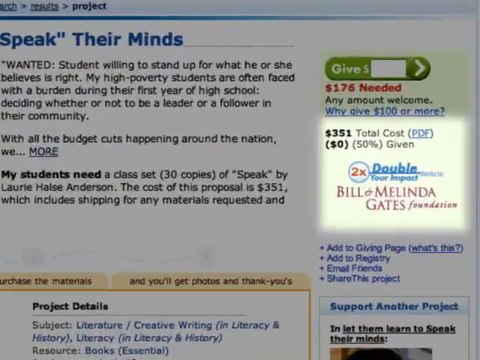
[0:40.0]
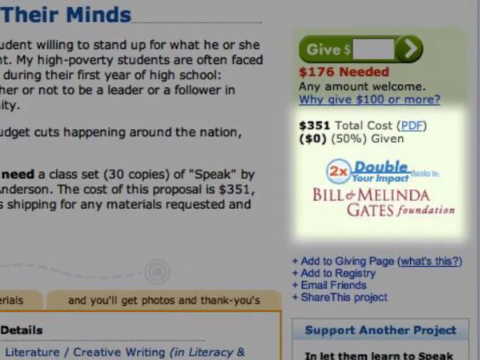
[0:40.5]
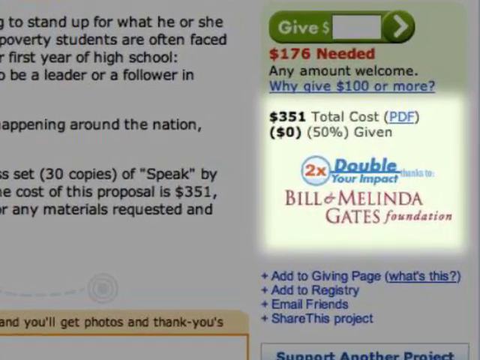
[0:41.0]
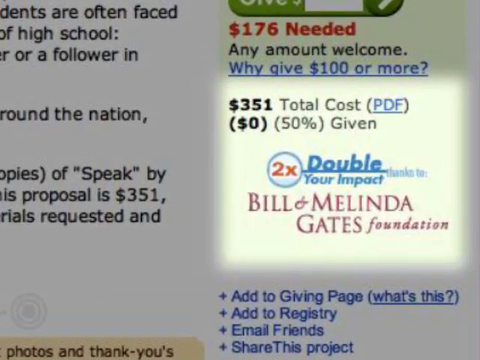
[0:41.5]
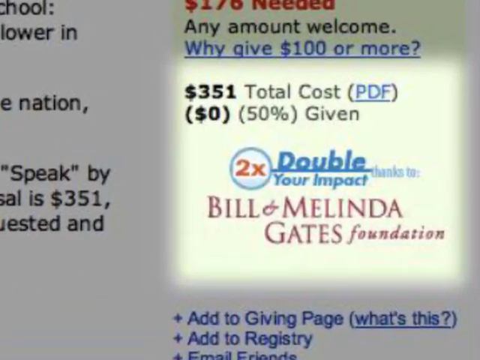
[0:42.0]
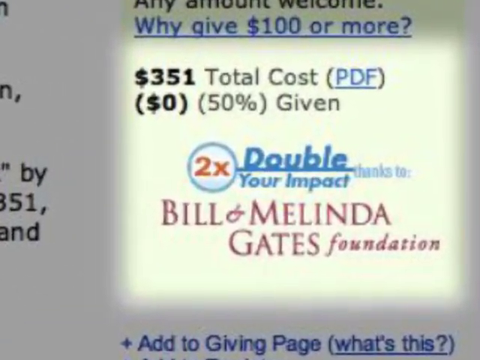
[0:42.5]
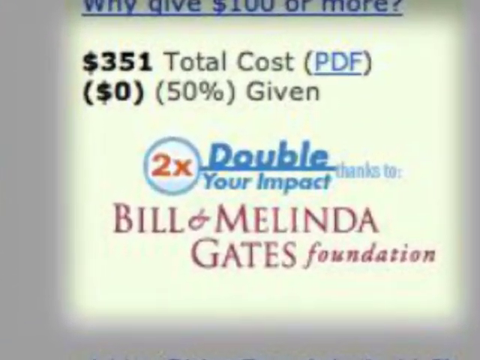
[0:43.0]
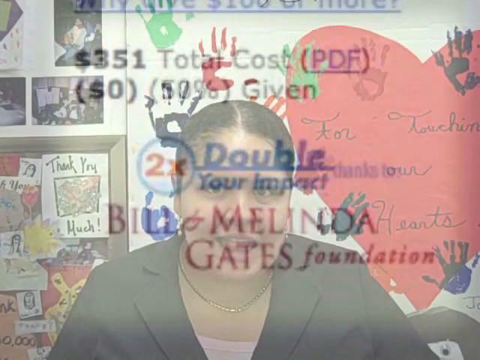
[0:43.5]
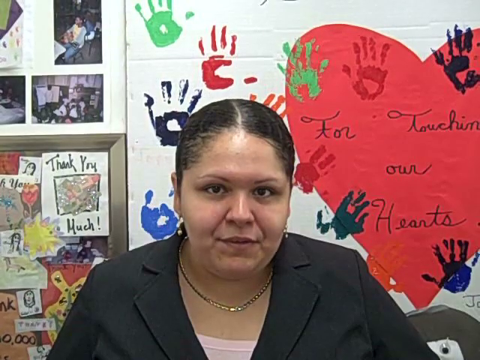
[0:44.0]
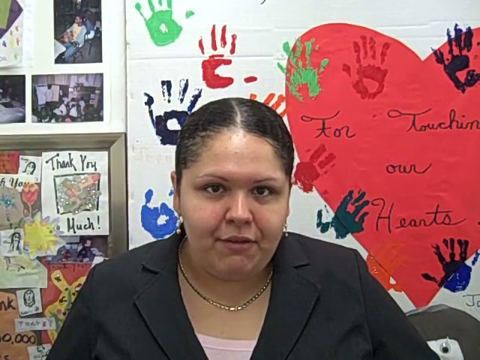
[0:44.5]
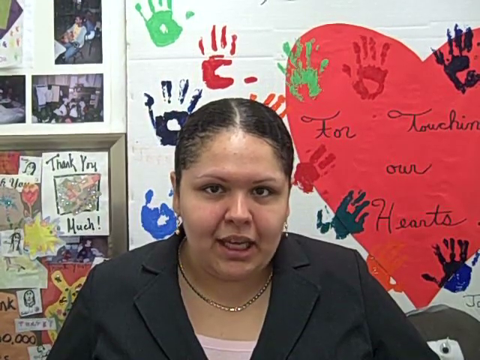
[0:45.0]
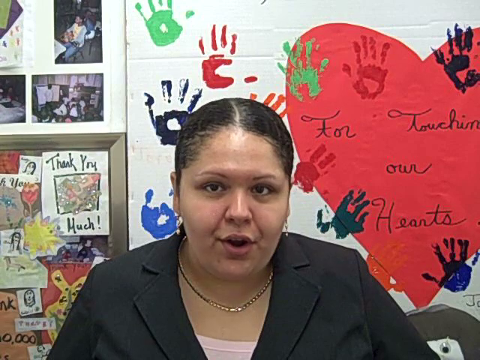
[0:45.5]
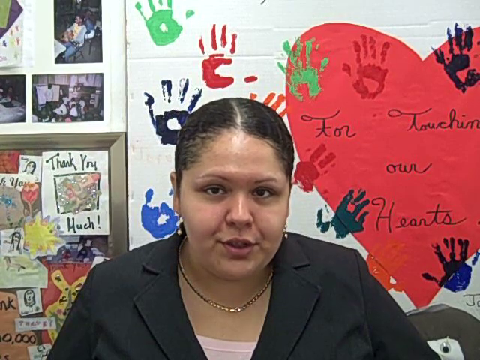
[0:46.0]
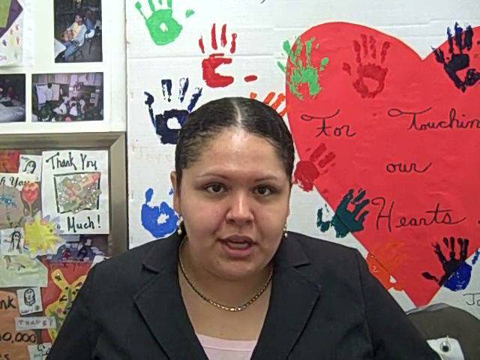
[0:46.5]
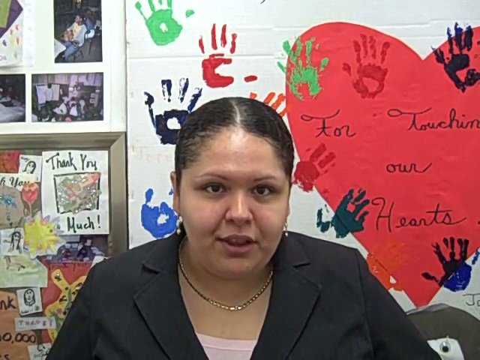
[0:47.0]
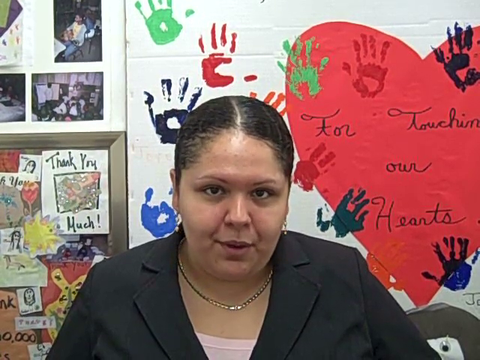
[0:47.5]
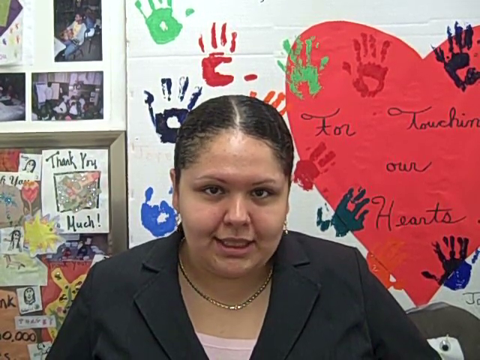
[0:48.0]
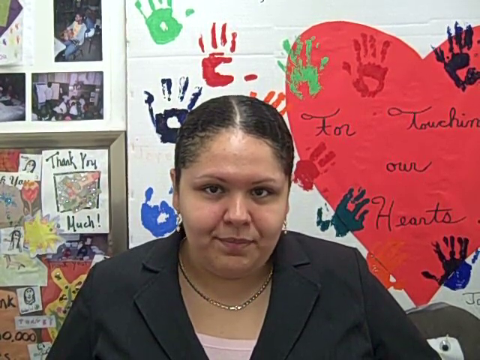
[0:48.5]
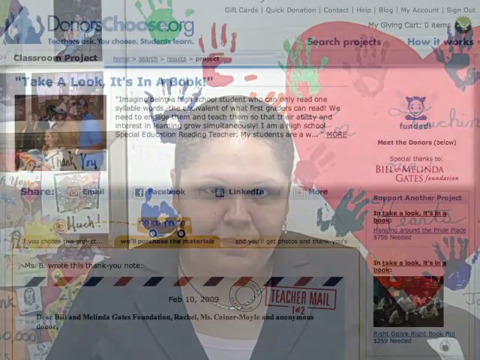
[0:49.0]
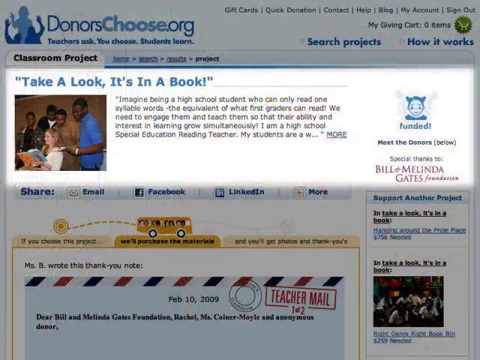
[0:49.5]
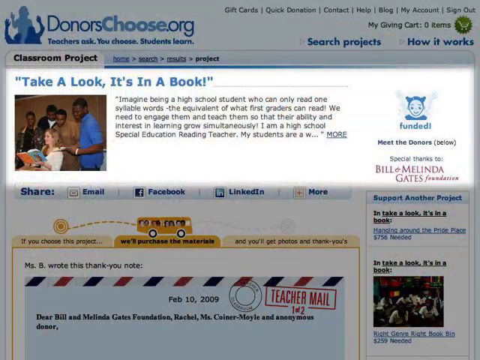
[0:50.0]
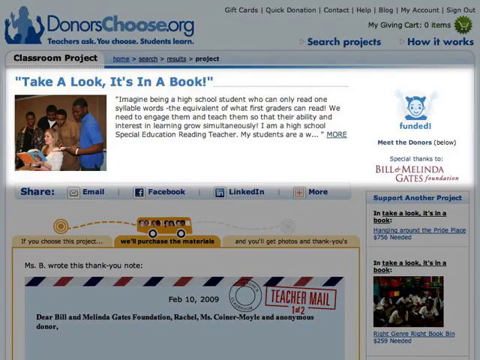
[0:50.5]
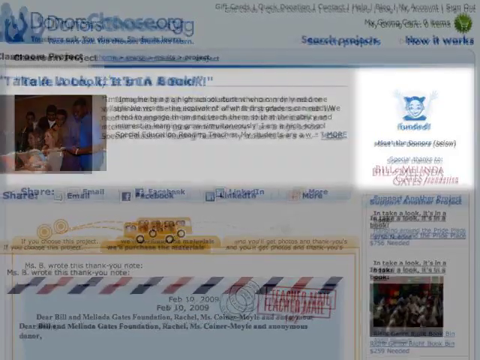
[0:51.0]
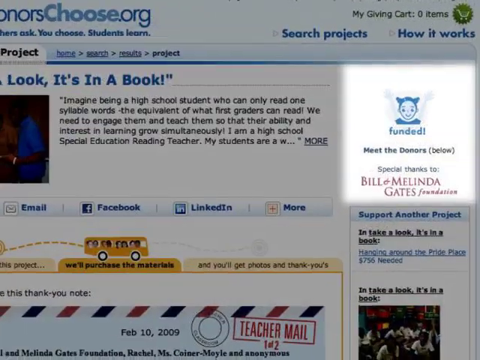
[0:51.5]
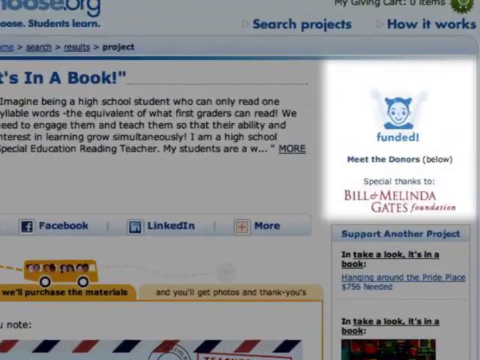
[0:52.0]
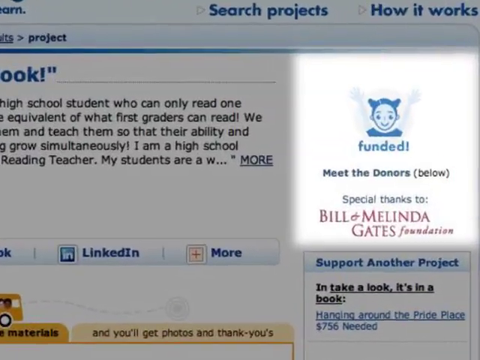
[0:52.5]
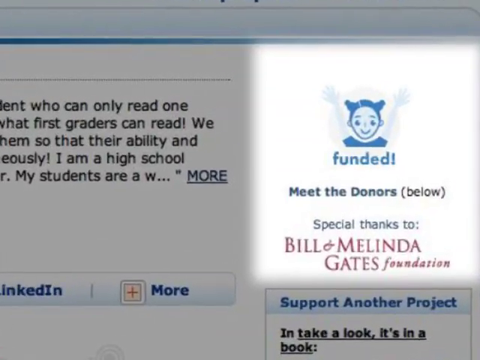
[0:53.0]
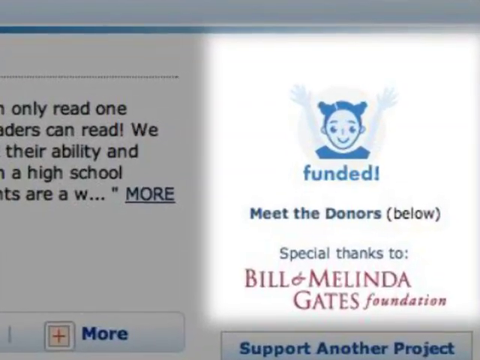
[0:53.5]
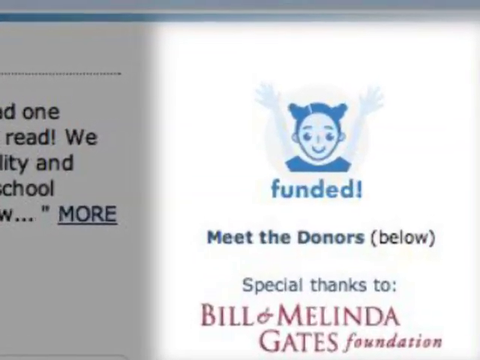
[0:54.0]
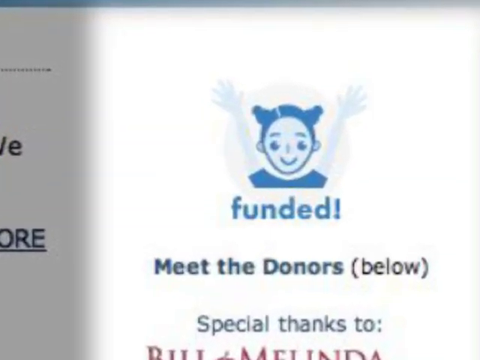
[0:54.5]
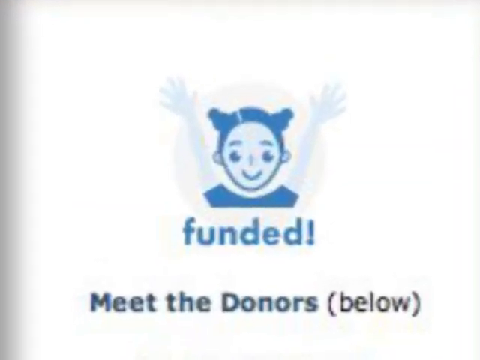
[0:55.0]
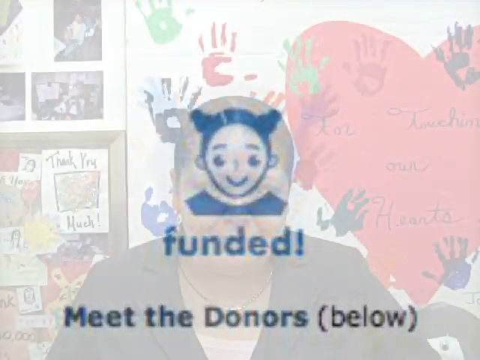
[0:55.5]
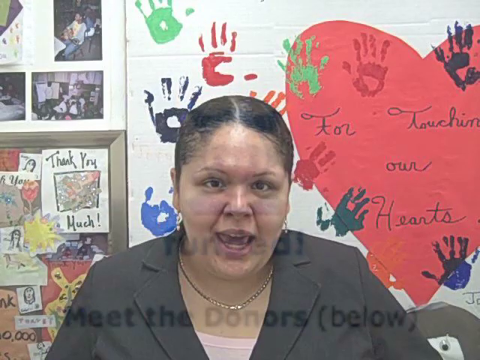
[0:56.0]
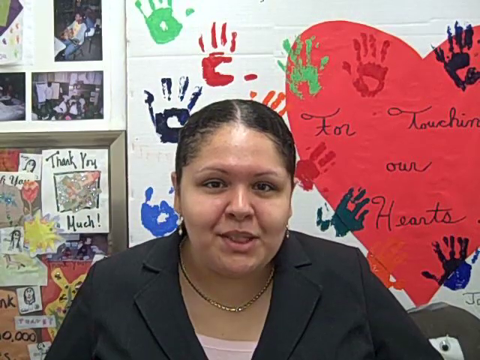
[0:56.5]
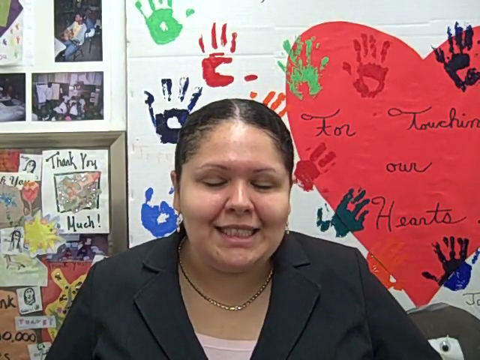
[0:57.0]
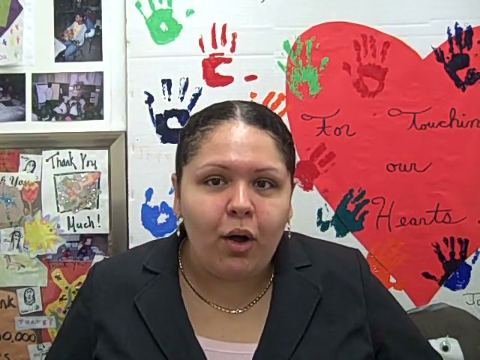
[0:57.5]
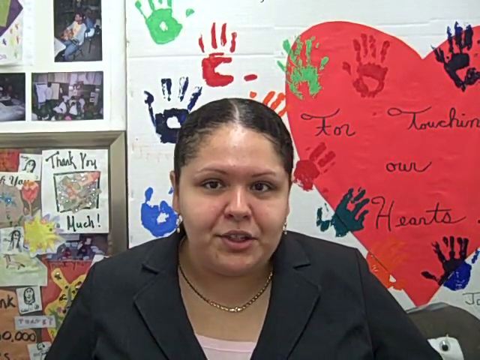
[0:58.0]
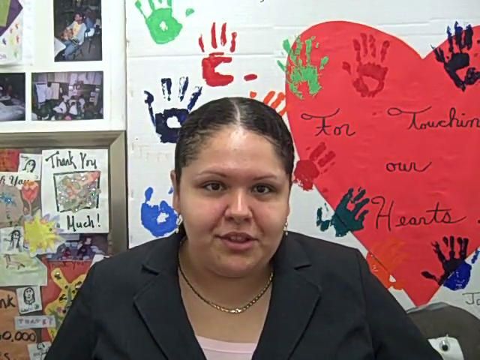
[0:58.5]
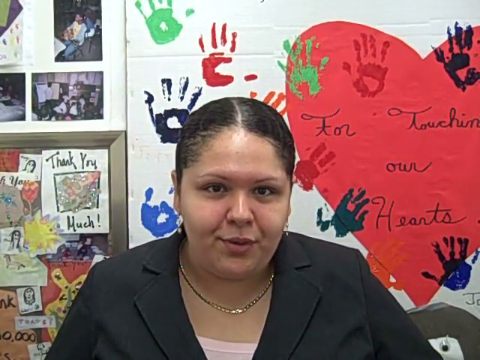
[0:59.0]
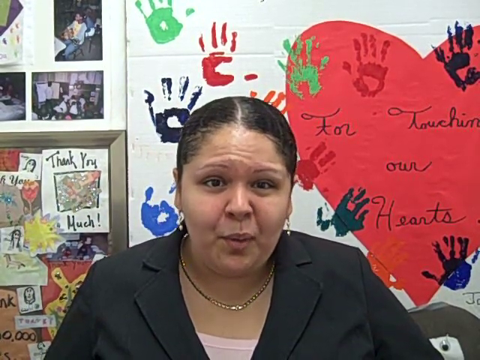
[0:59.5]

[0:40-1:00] The screen zooms onto some kind of donation goal with a total cost of $351, connected to a foundation called Bill and Melinda Gates, indicating that impact can be doubled thanks to them. The screen fades to a woman sitting in her office. She wears a black blazer, a thin, small golden necklace, and some kind of earrings that are probably silver. Behind her are different kinds of artwork, probably made by her students or people she helps. The screen changes to another donation goal that was already funded, called "Take a Look, it's in a book". Then the screen again shows the same woman talking.